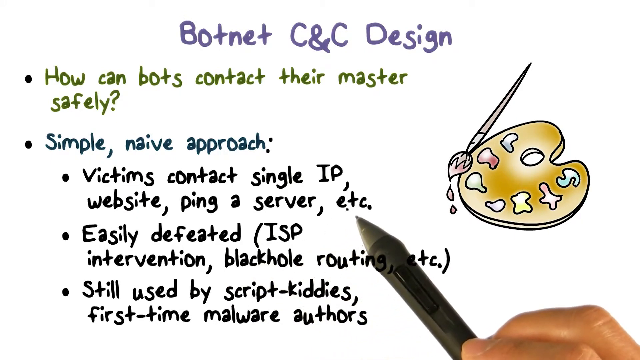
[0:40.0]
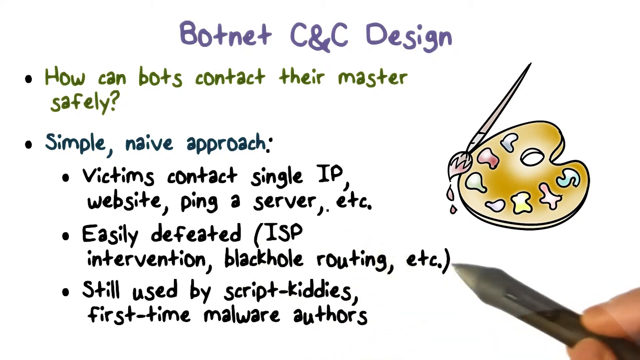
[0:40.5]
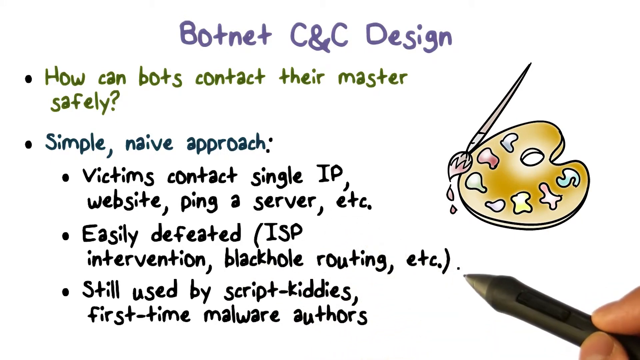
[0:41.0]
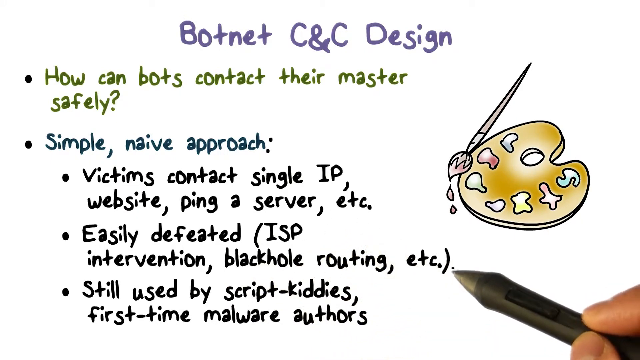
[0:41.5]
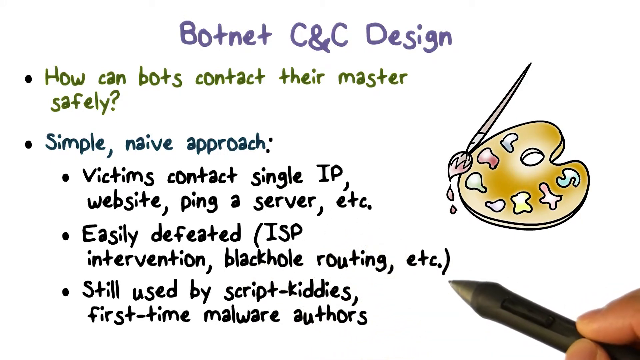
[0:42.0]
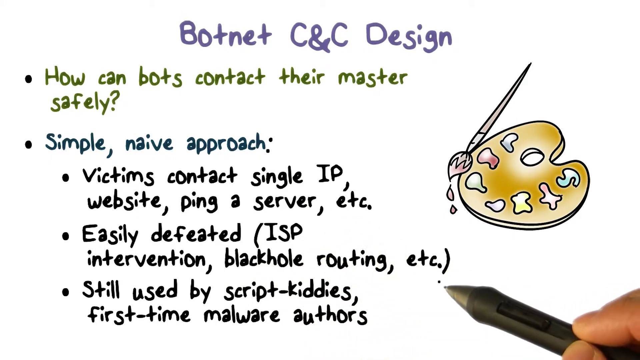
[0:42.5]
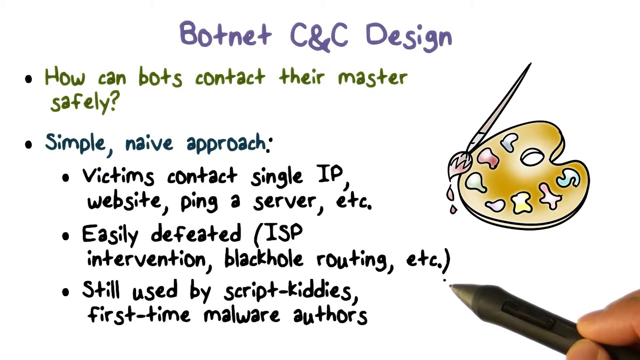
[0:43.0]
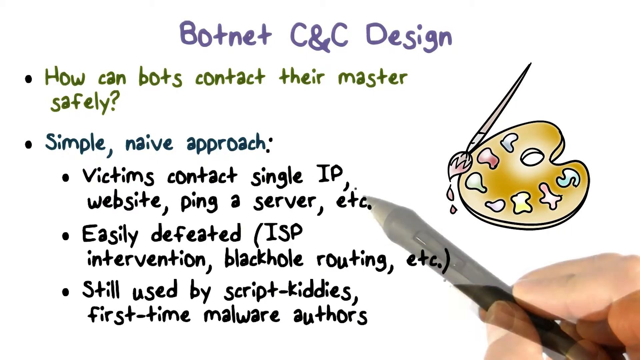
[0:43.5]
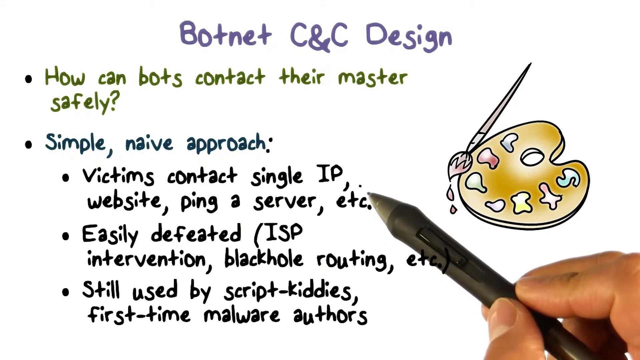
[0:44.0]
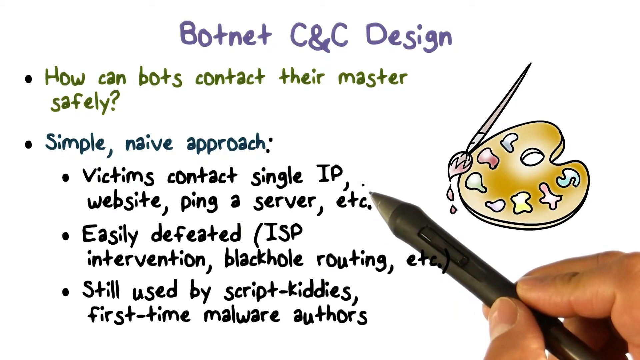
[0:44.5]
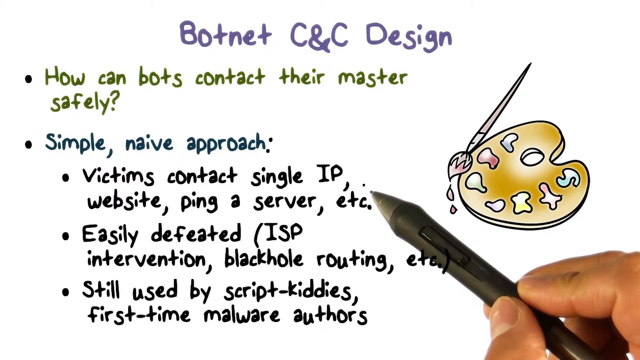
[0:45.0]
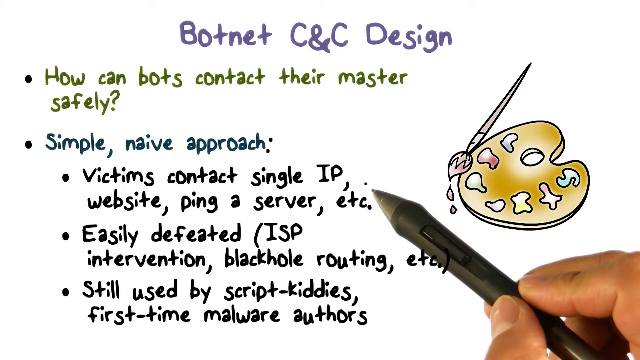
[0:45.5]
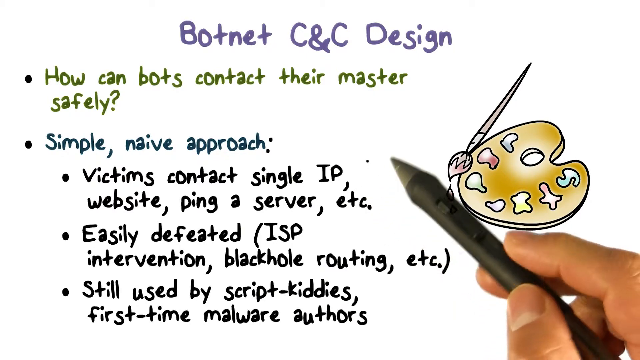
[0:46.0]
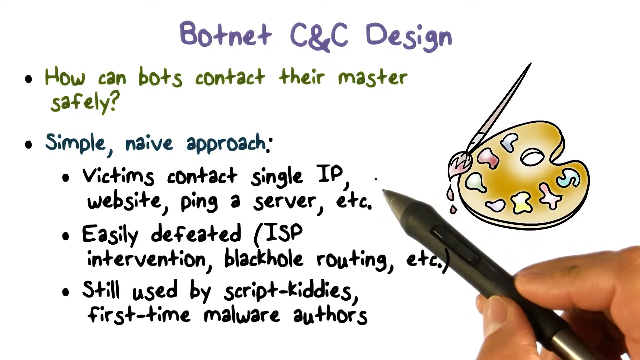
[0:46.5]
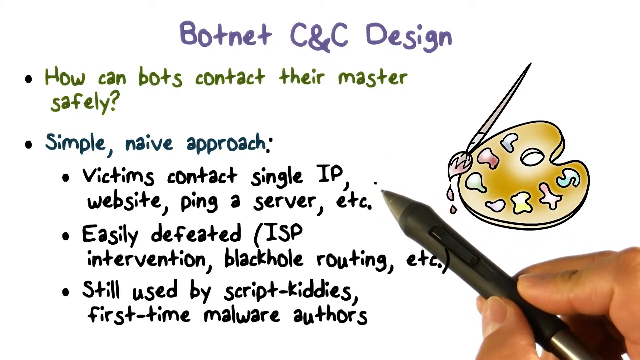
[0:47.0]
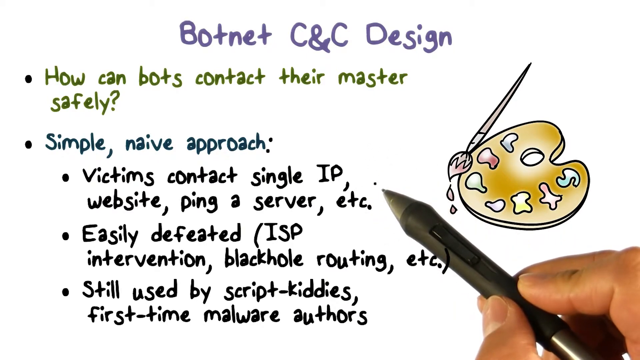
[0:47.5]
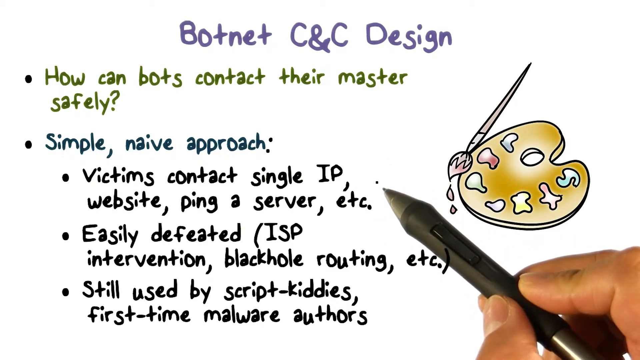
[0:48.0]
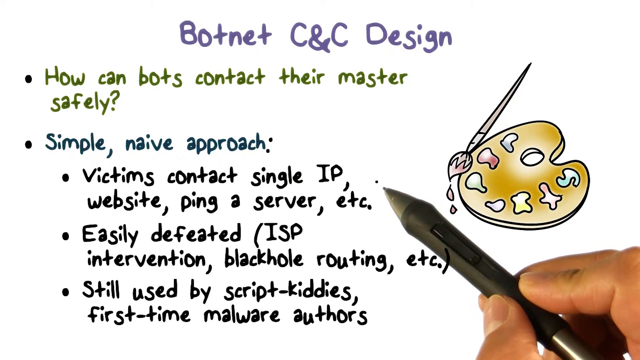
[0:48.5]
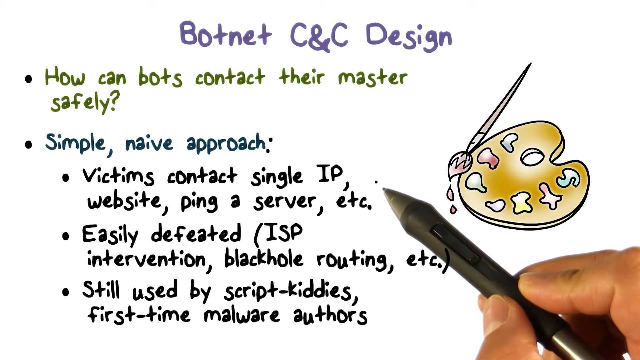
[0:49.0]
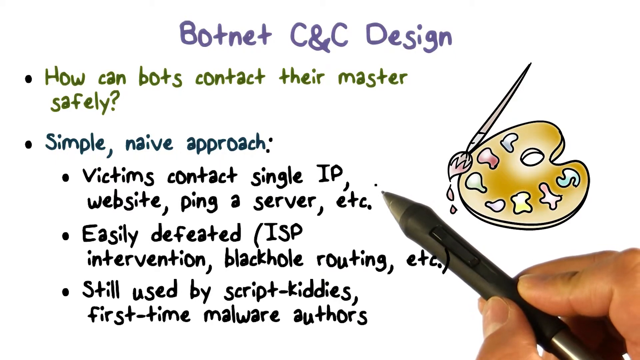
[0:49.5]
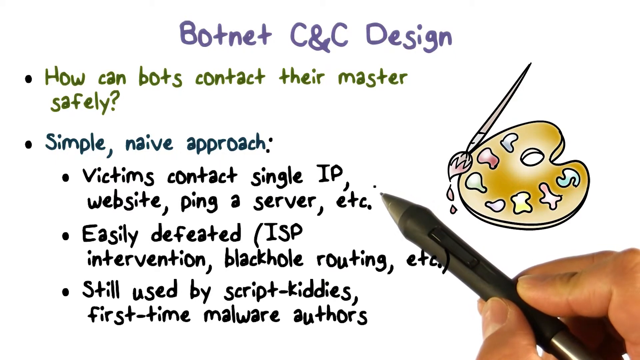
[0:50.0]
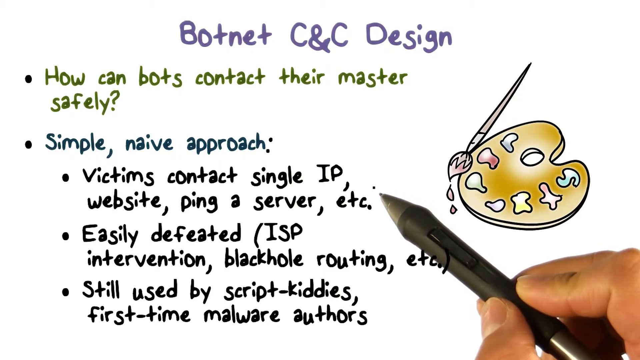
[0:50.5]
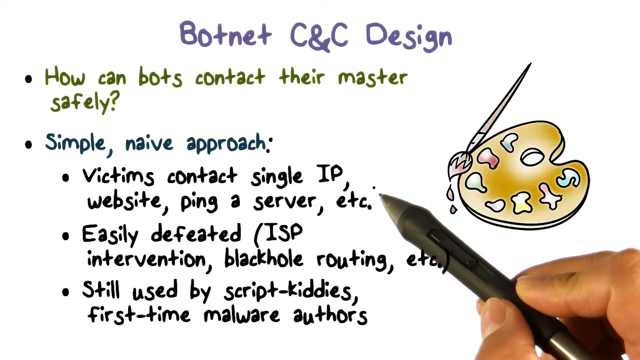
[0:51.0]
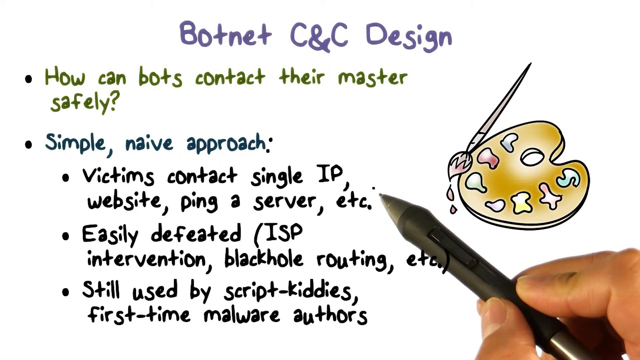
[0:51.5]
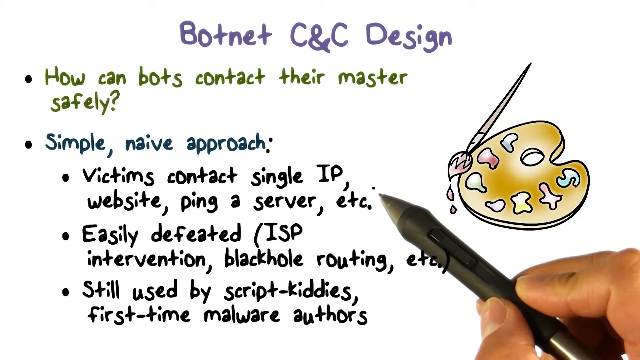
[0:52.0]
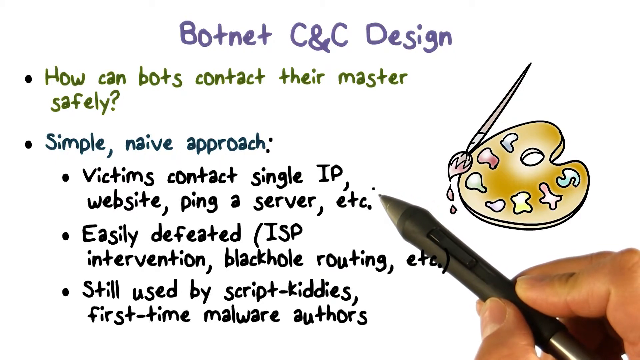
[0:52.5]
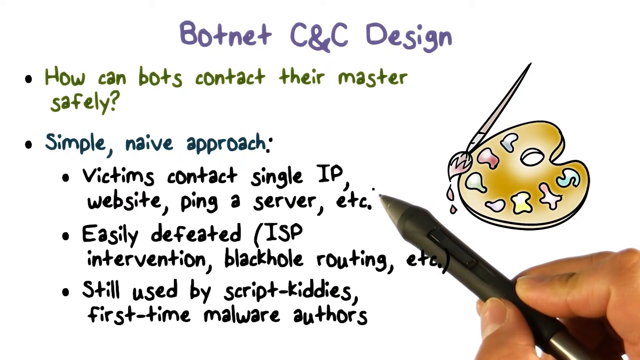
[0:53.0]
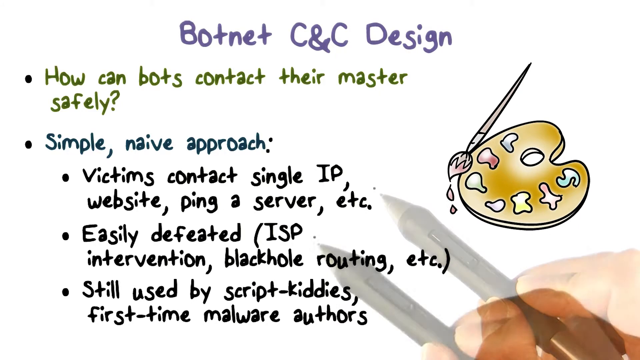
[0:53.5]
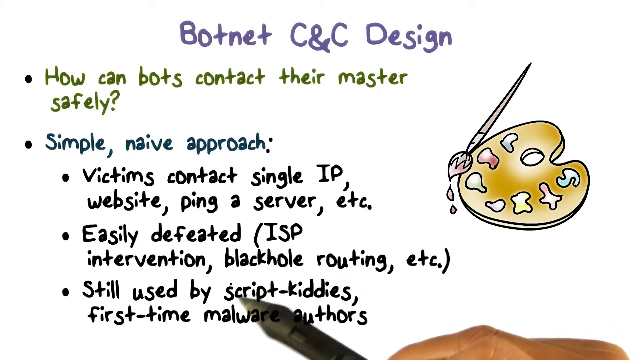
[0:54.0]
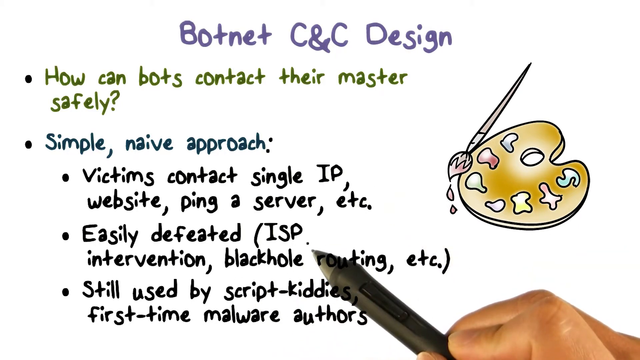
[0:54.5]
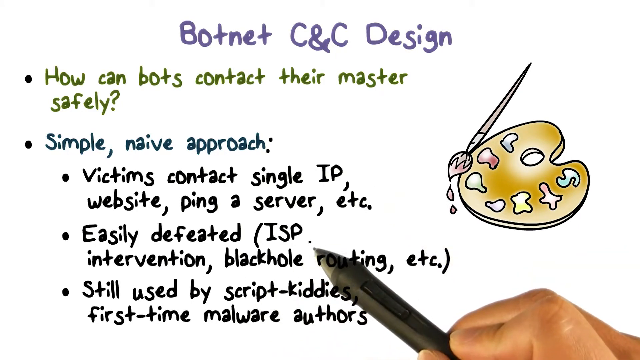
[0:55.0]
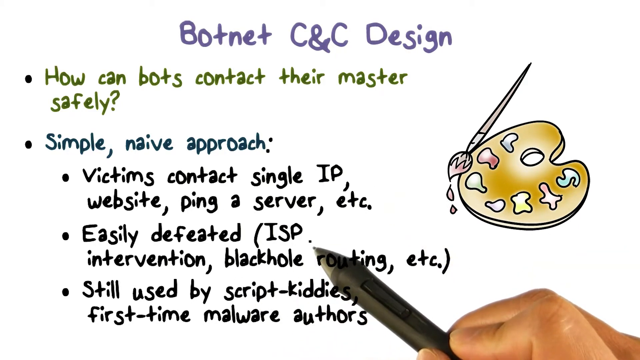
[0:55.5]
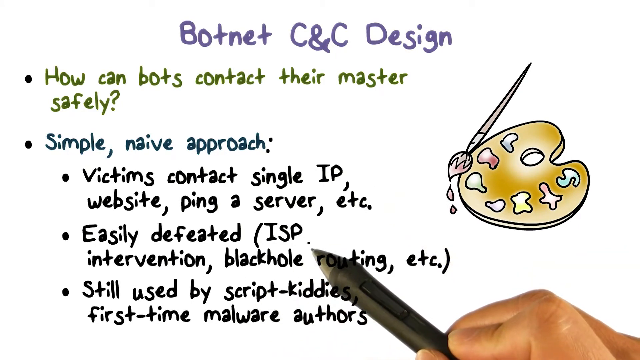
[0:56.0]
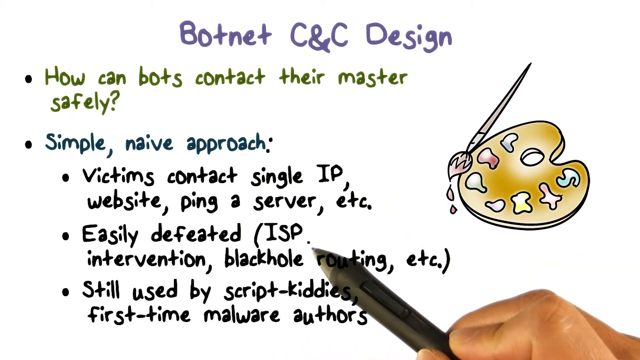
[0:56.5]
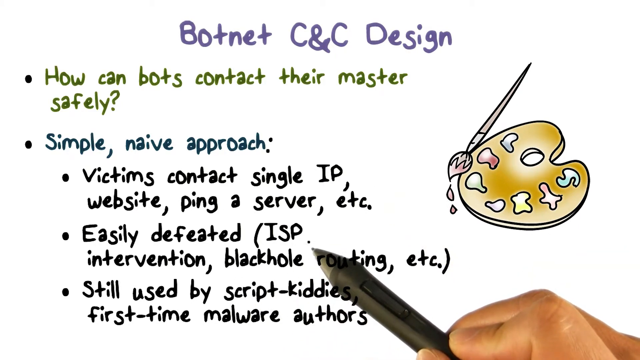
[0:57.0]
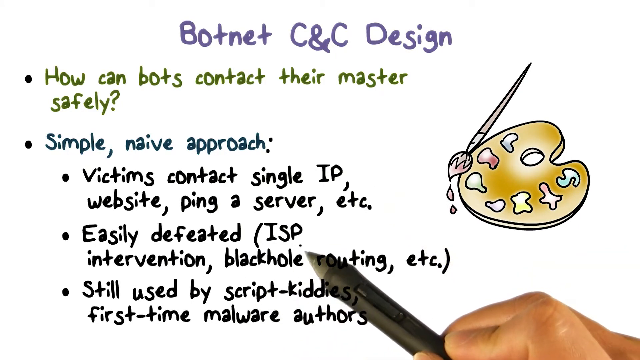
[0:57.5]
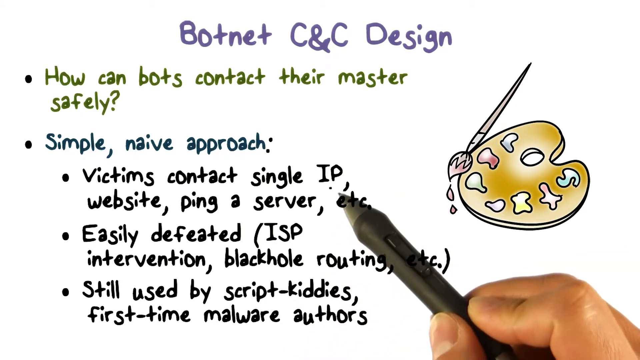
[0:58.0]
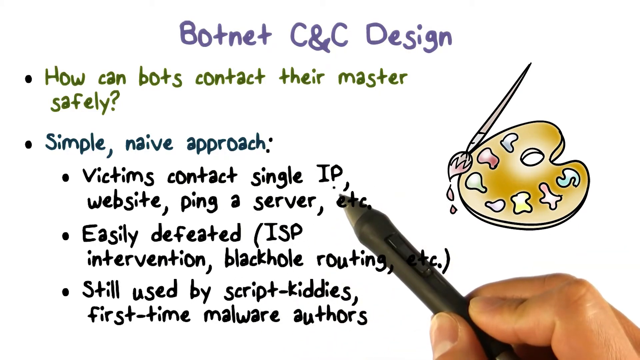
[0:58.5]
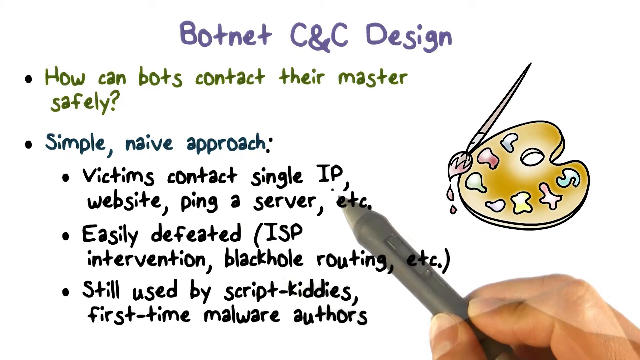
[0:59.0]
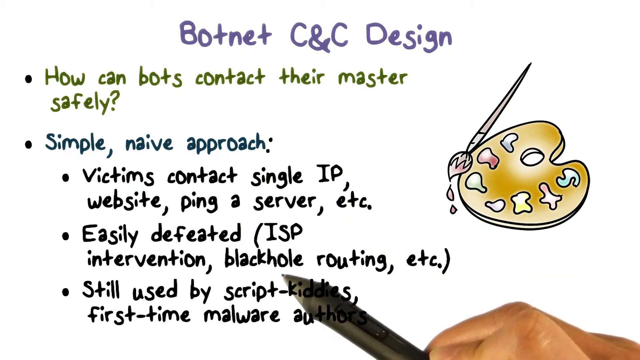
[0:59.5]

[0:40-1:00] The black pen moves across the black bullet points, highlighting specific parts. It first focuses on the first bullet point, "victims contact single IP website ping their server," hovering on it, then quickly moves to the second, "easily defeated ISP intervention, black hole routing, etc.," with the last part in parentheses. After hovering there, it moves back up to the first bullet point about victims contacting single IP websites. Finally, the pen moves back down below the second bullet point to the third, "still used by script kitties, first time malware." Throughout, the pen moves between these three black text items on this slide of either a presentation or a speech.